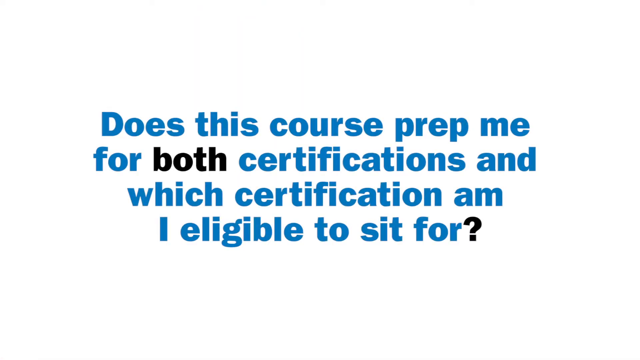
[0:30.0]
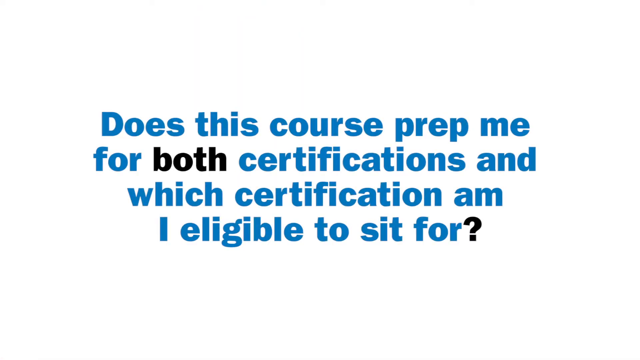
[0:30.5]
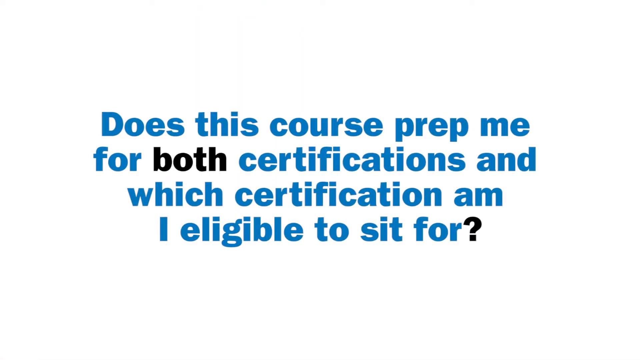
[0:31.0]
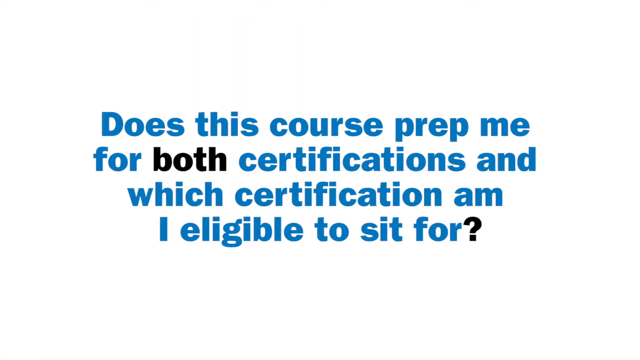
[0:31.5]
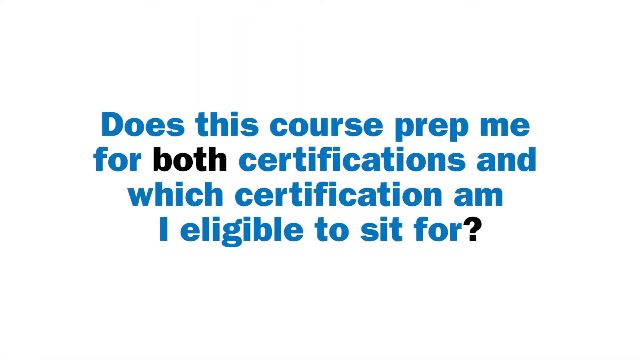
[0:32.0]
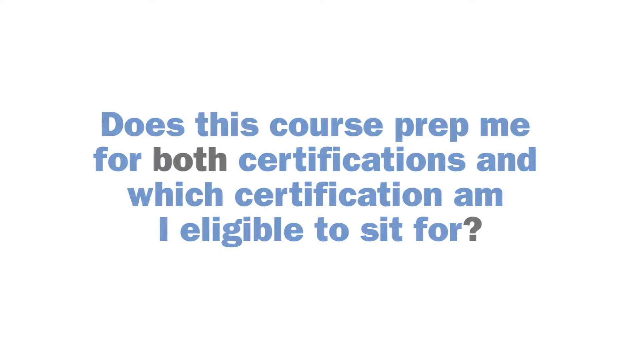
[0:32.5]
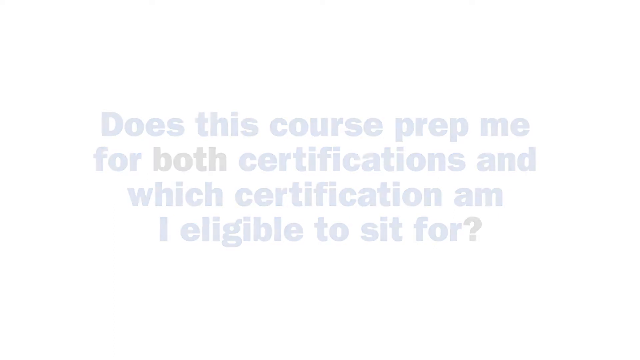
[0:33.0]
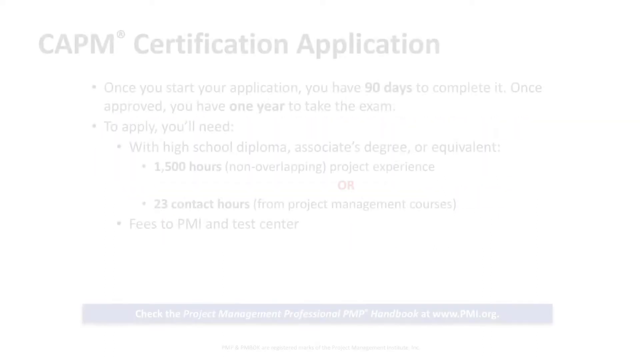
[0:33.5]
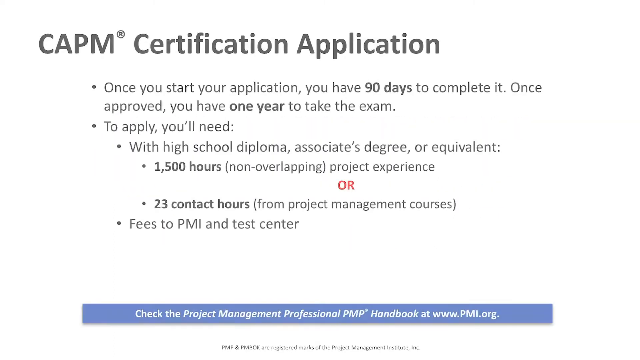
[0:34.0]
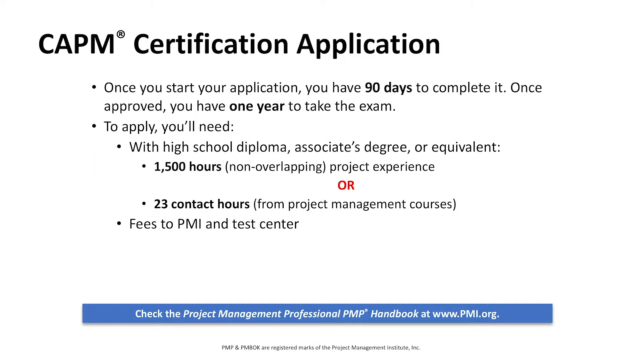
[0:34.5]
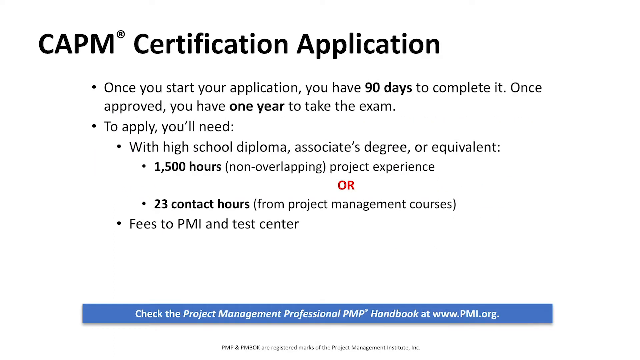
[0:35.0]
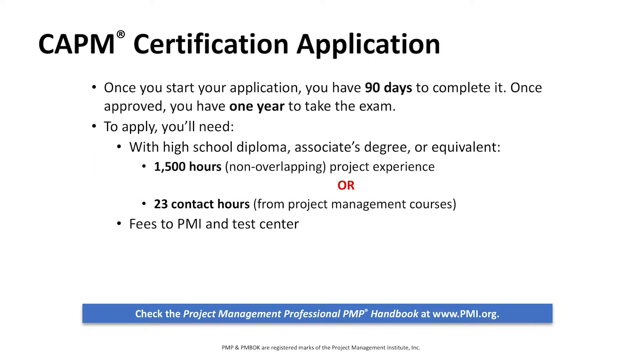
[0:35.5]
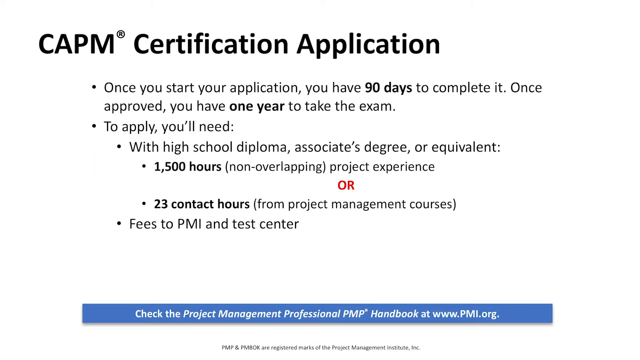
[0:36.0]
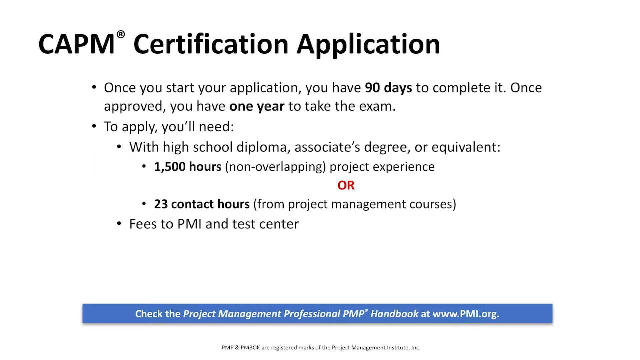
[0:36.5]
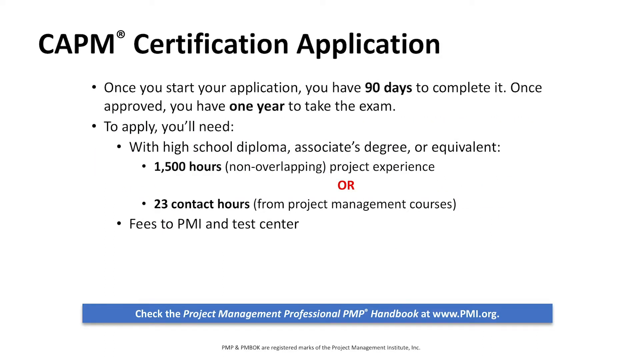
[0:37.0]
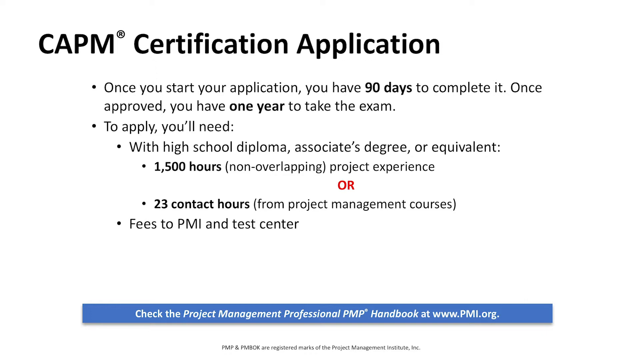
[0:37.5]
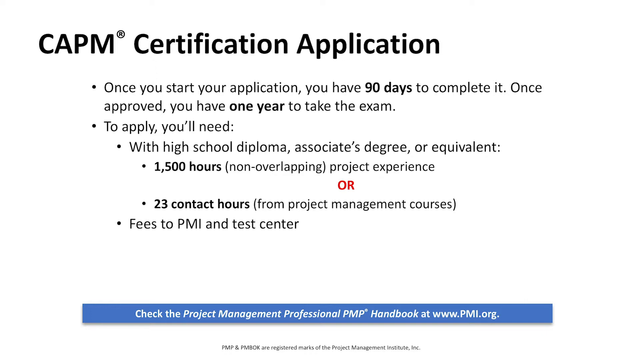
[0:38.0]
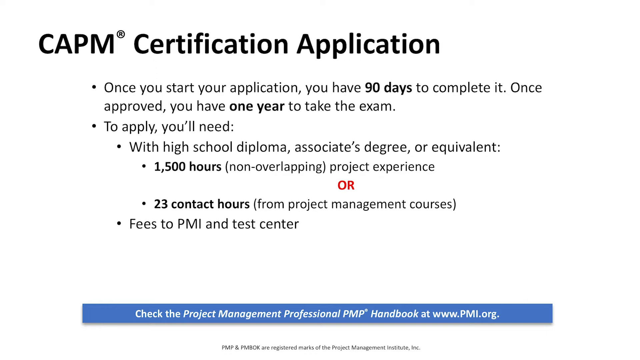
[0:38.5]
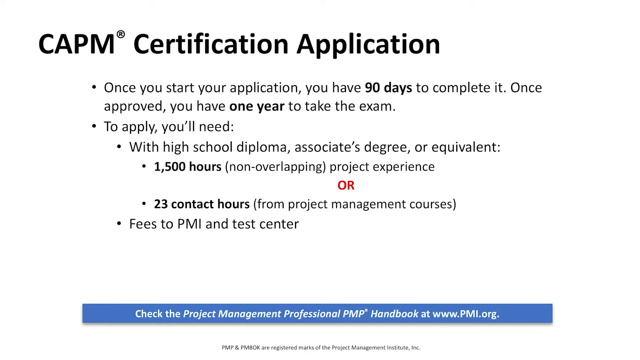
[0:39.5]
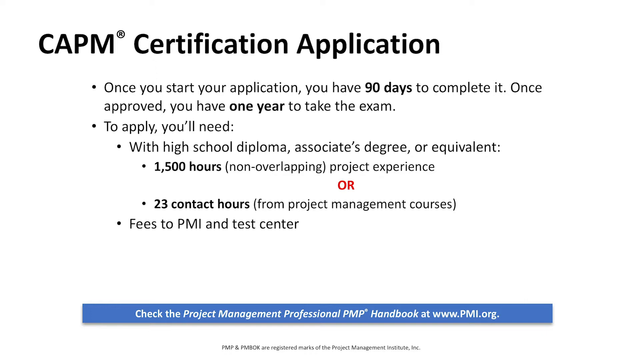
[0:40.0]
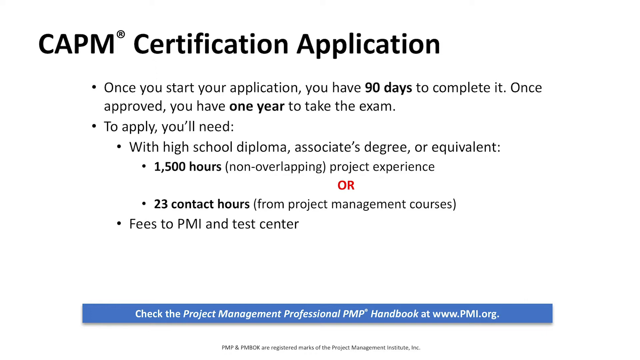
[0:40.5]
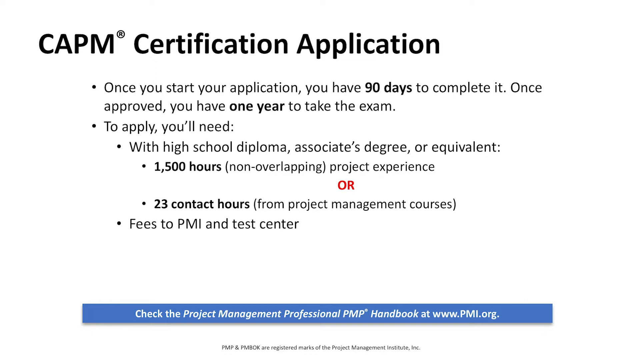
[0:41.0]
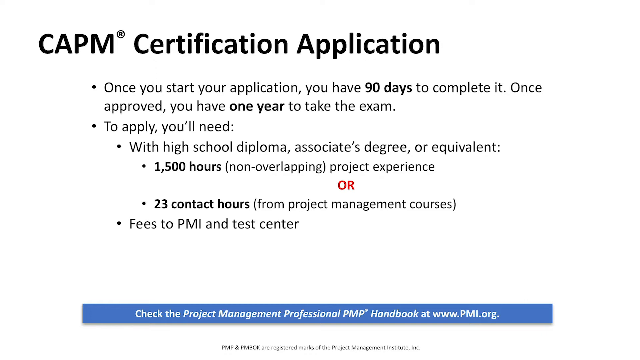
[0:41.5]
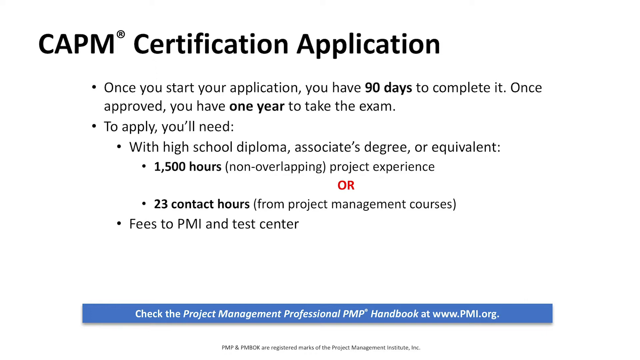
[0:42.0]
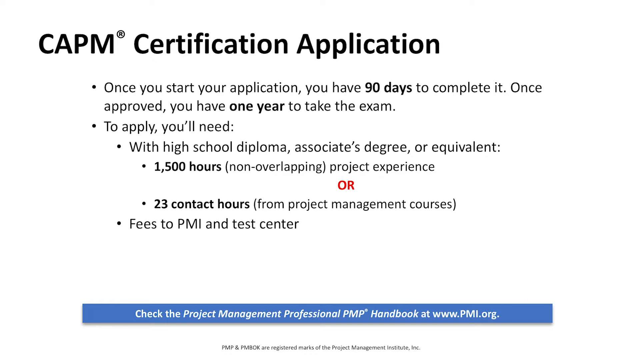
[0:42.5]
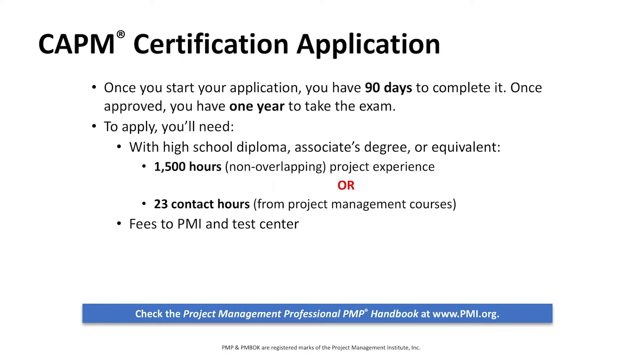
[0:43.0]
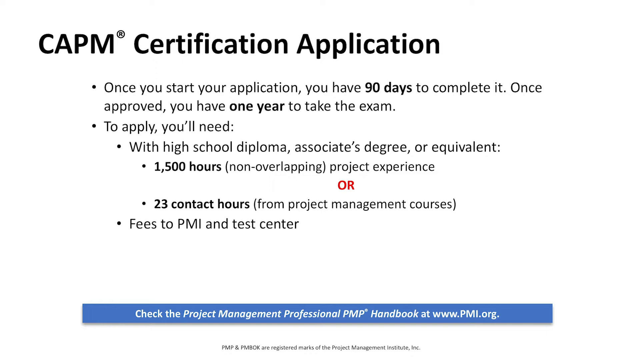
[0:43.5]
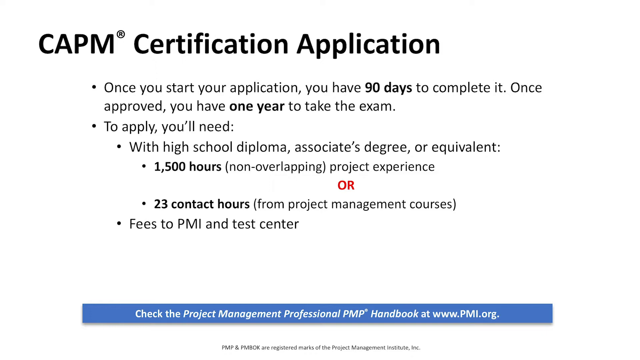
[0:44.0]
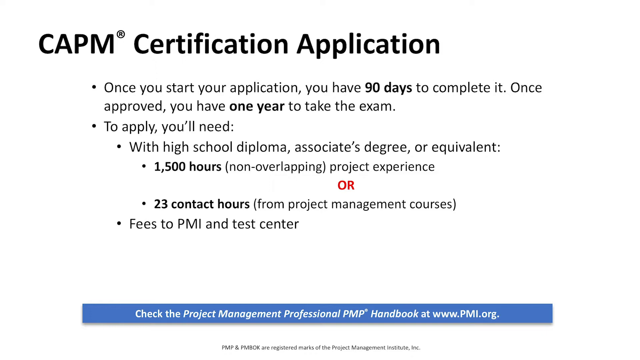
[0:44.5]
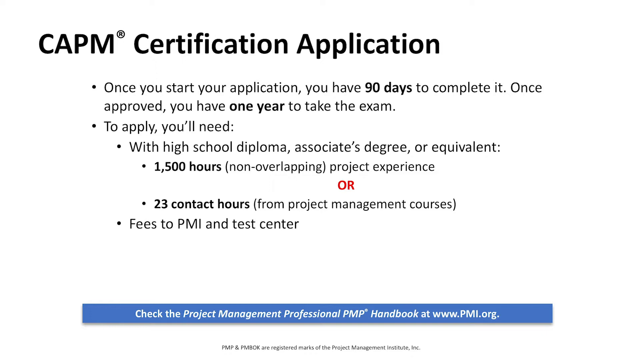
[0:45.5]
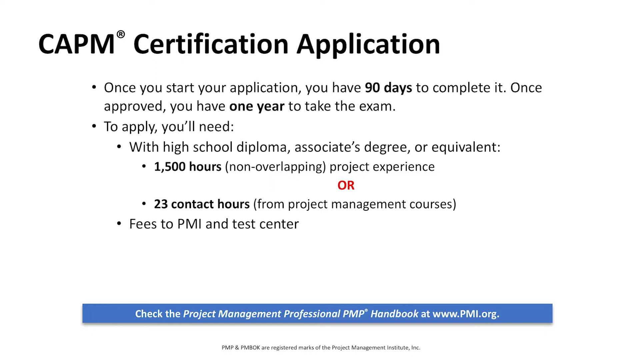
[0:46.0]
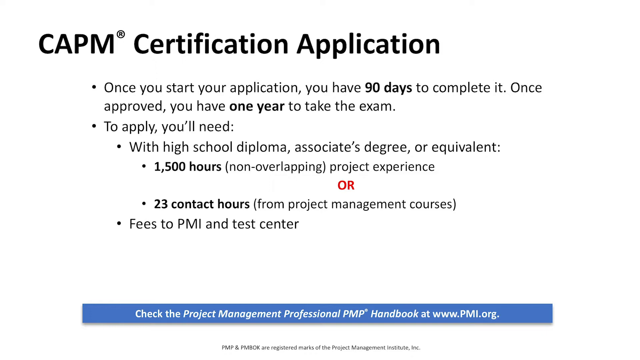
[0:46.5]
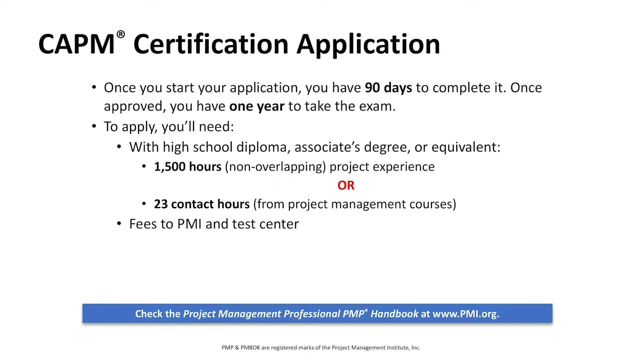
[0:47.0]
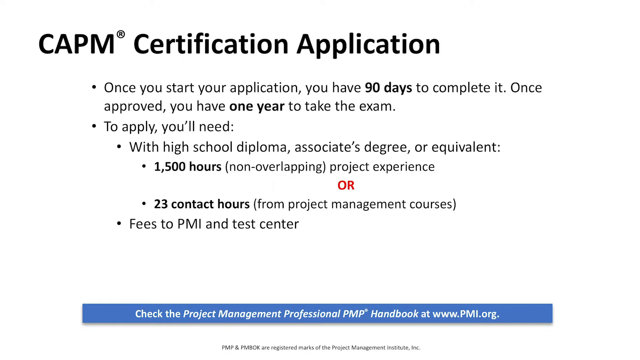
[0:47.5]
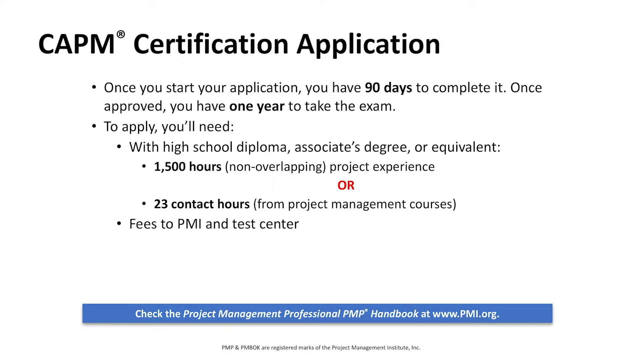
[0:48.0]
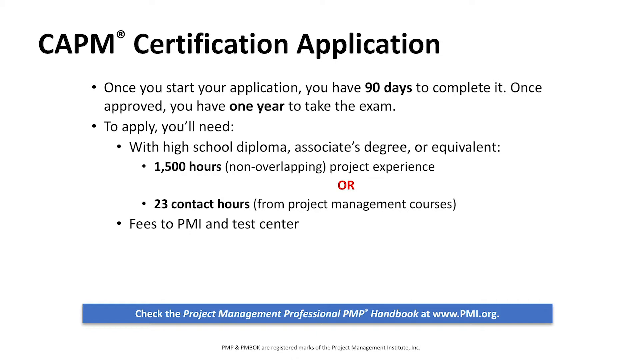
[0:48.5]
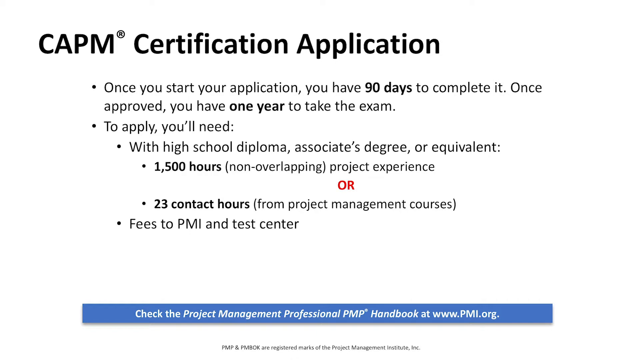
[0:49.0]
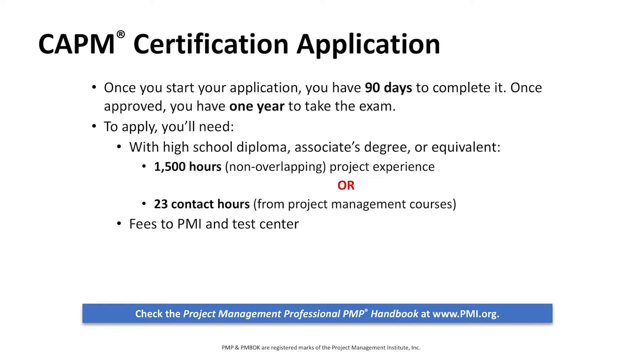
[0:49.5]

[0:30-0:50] A new slide appears with the heading "CAPM certification application" in black font, followed by six bullet points of information. Parts of the text are in bold, such as "90 days", "one year", "1500 hours" and "23 contact hours", while the rest is in a normal black font. Below, the text "check the project management professional PMP handbook at www.pmi.org" is written in white inside a box with a blue background. The word "OR" appears in red capital letters, and more information is written below the blue background.